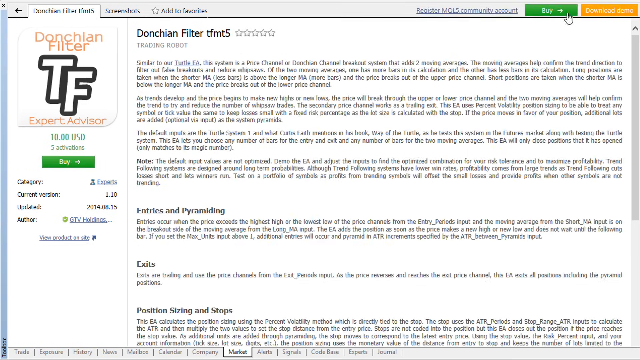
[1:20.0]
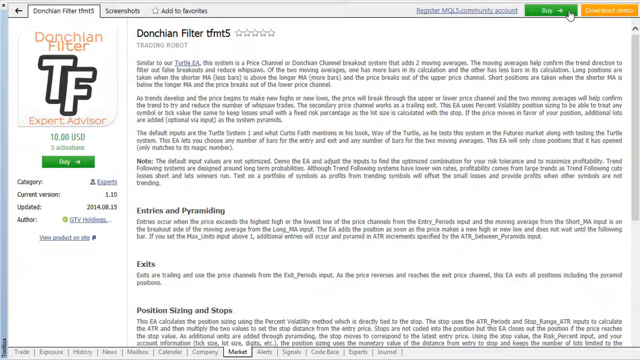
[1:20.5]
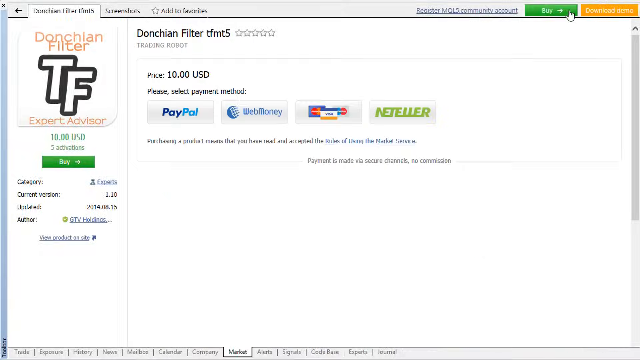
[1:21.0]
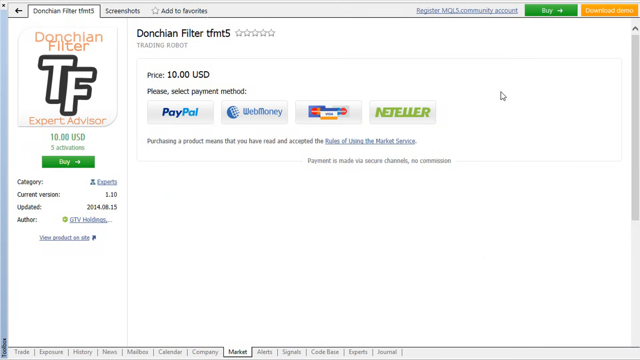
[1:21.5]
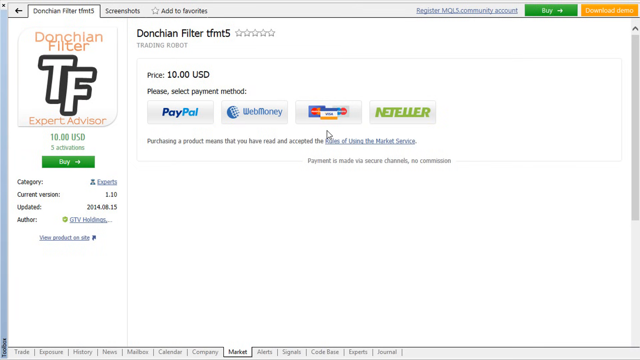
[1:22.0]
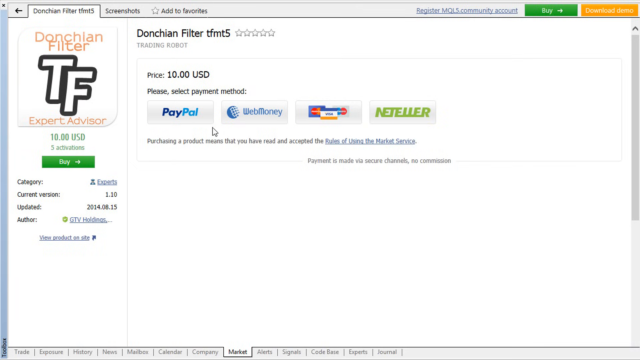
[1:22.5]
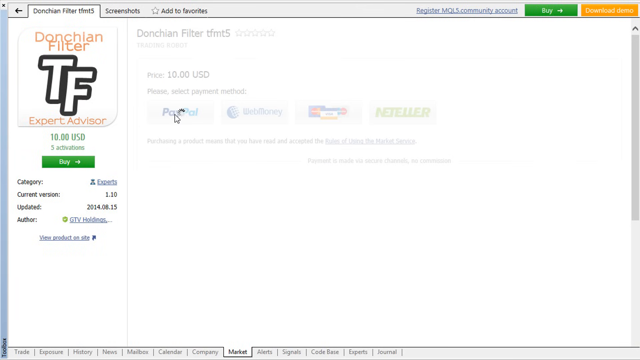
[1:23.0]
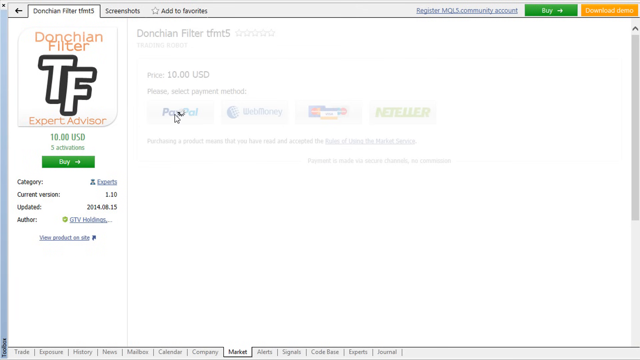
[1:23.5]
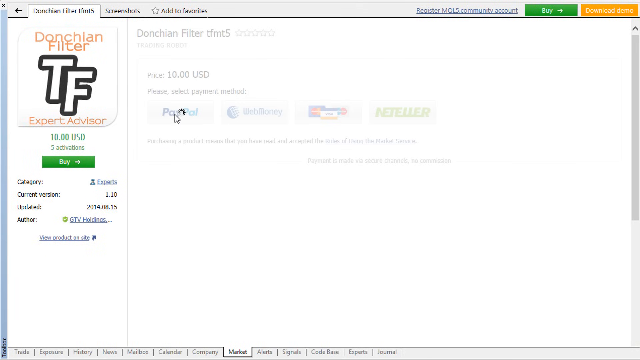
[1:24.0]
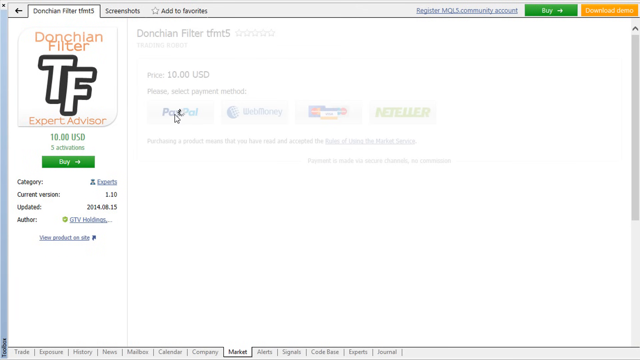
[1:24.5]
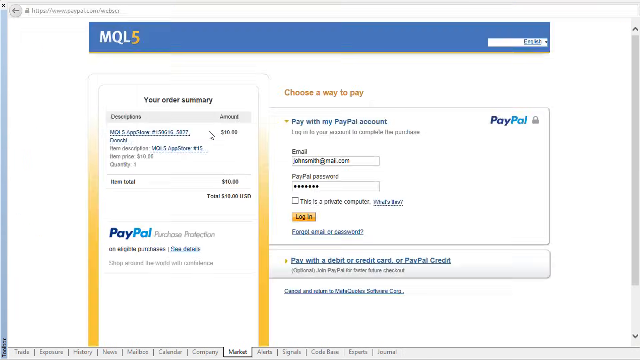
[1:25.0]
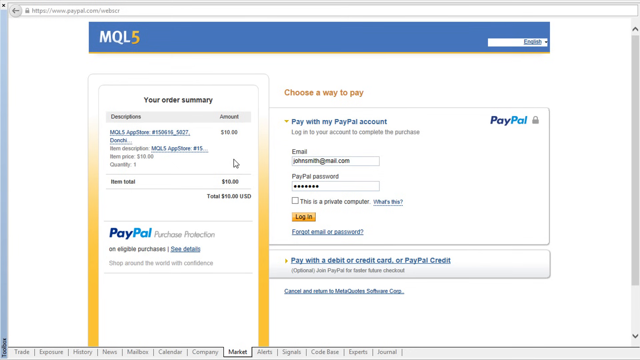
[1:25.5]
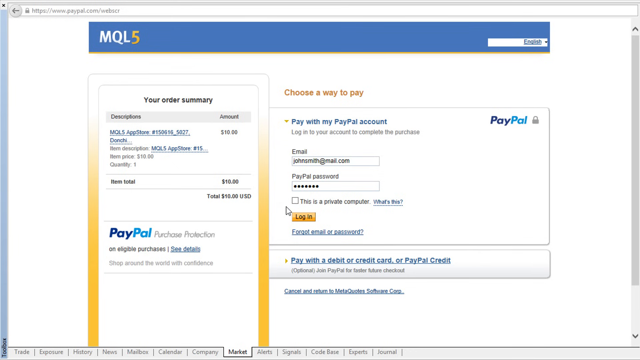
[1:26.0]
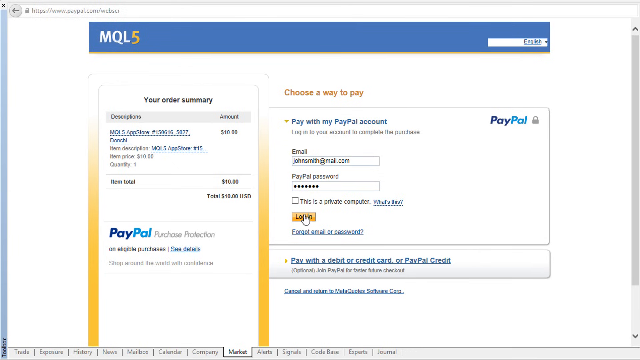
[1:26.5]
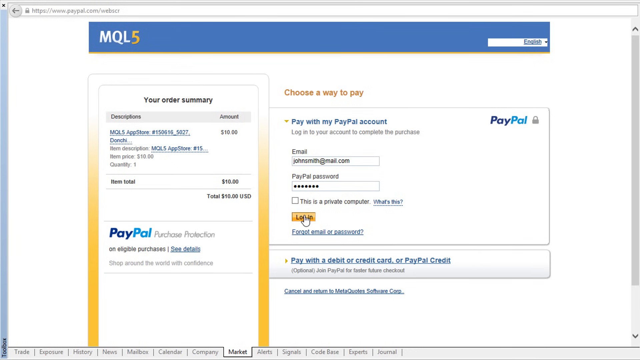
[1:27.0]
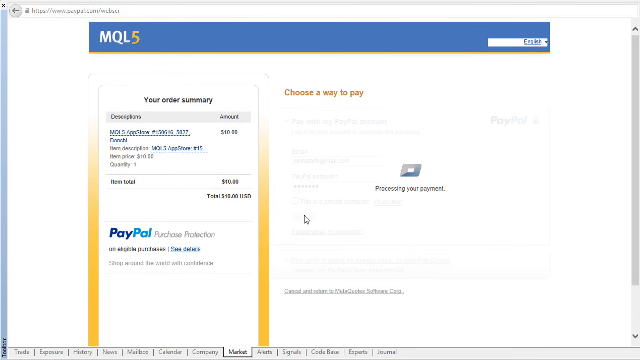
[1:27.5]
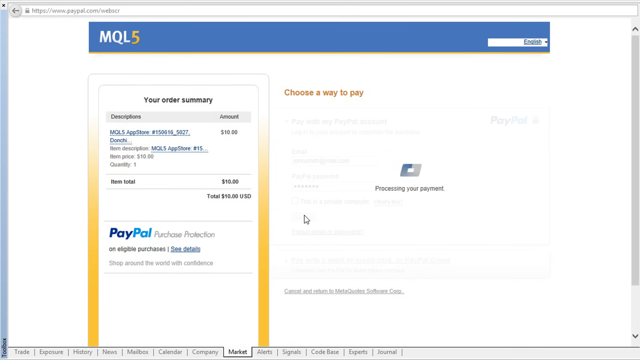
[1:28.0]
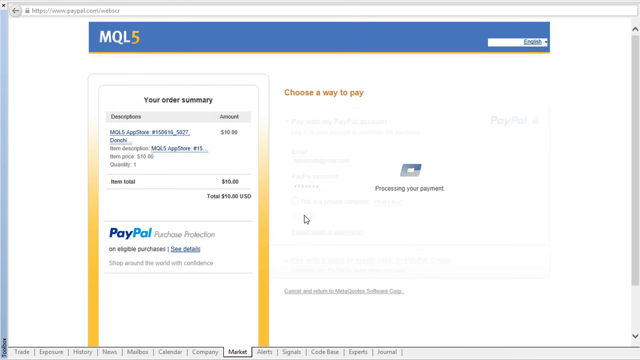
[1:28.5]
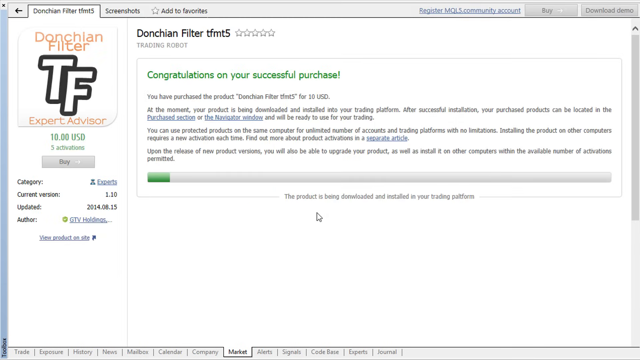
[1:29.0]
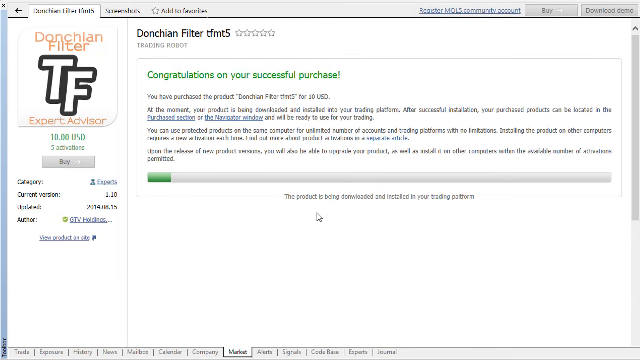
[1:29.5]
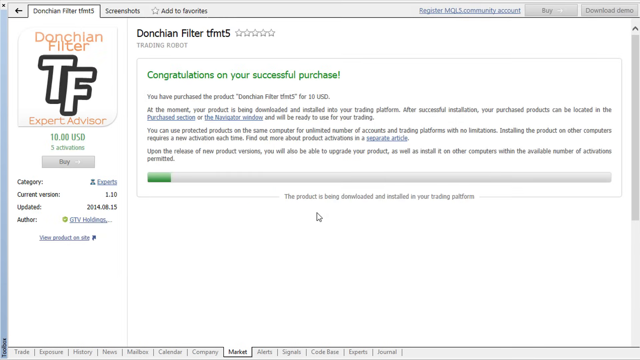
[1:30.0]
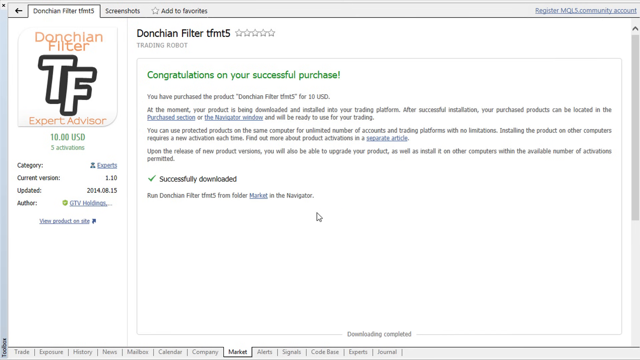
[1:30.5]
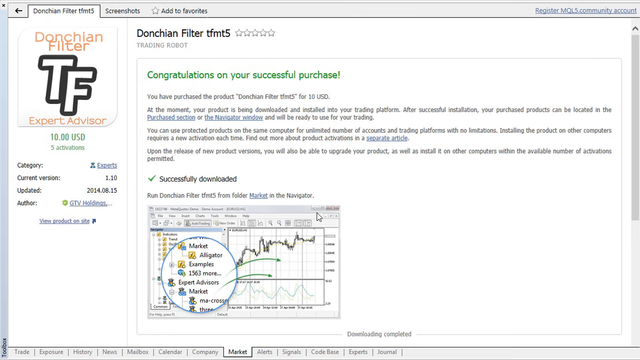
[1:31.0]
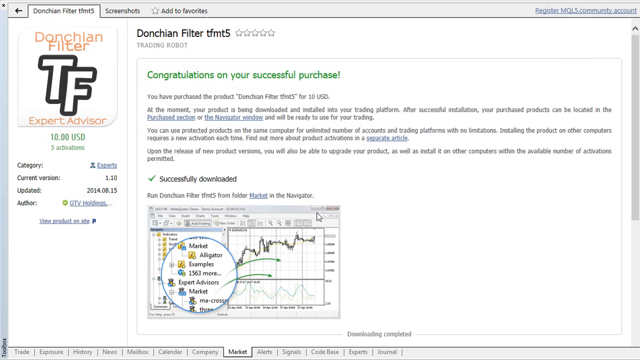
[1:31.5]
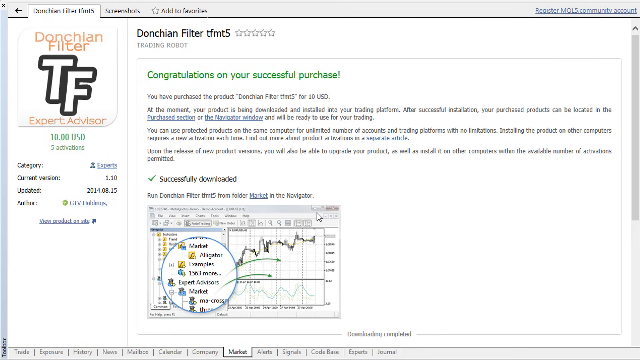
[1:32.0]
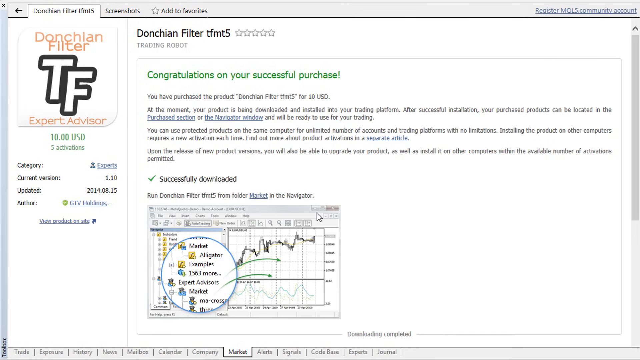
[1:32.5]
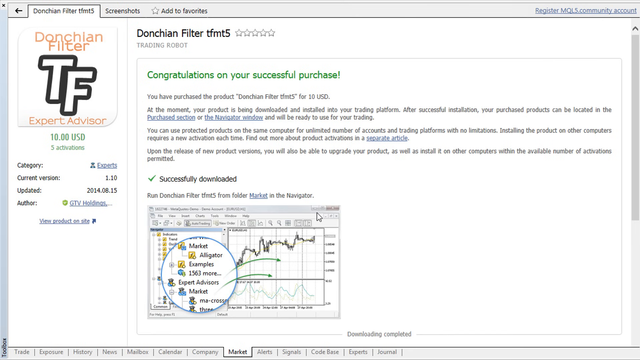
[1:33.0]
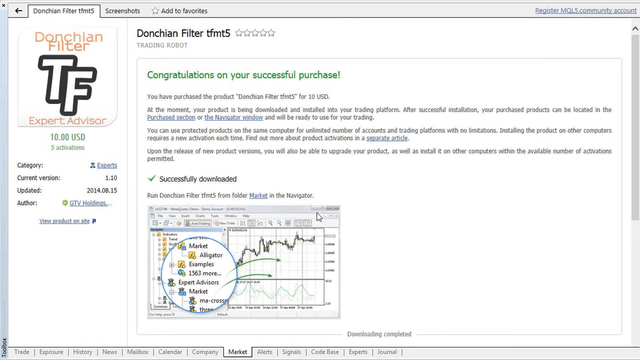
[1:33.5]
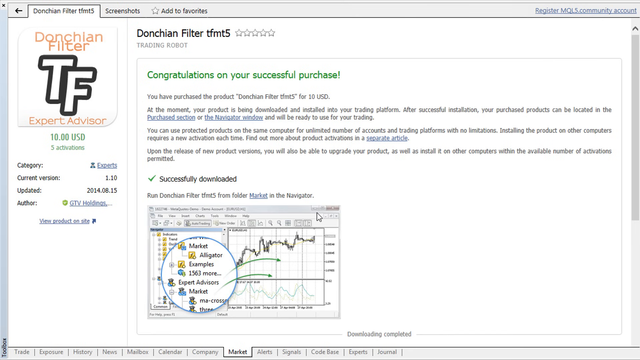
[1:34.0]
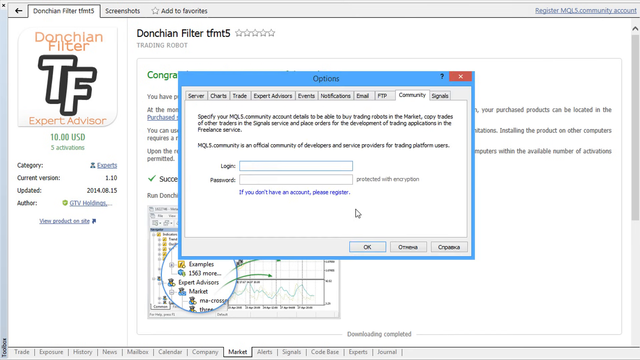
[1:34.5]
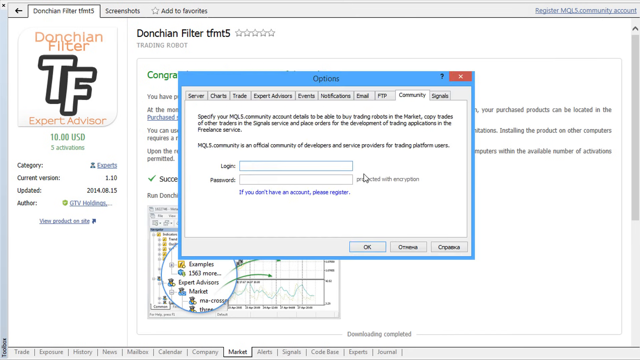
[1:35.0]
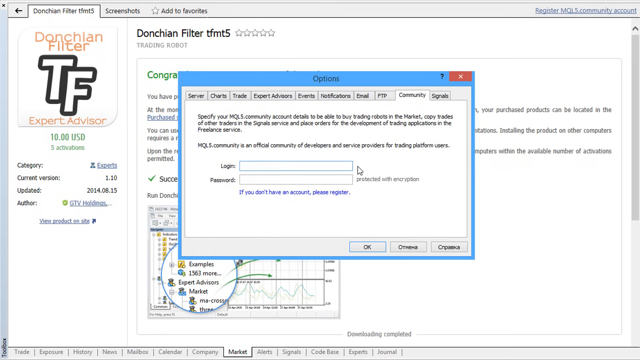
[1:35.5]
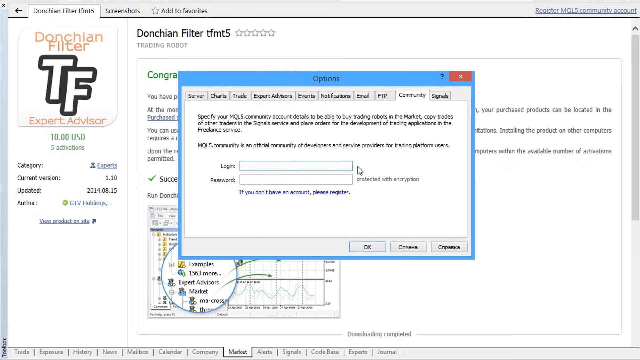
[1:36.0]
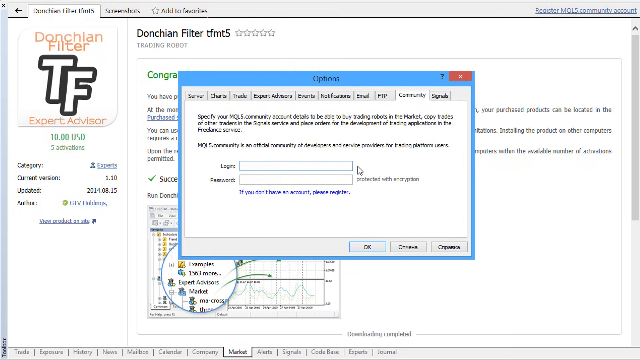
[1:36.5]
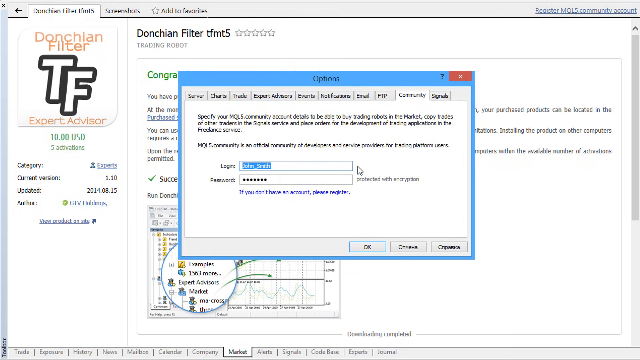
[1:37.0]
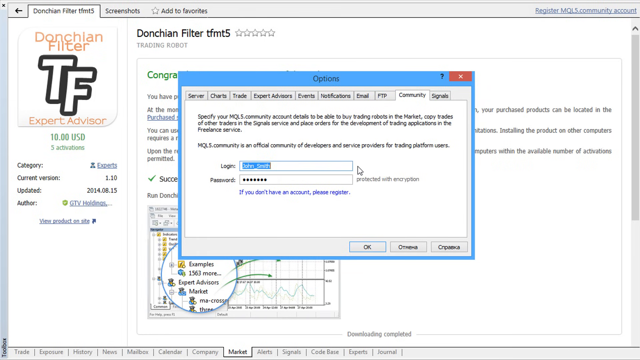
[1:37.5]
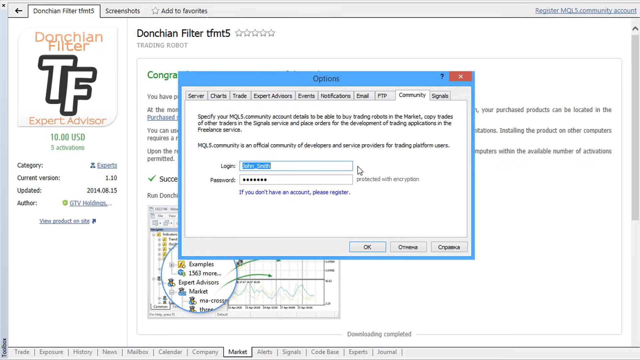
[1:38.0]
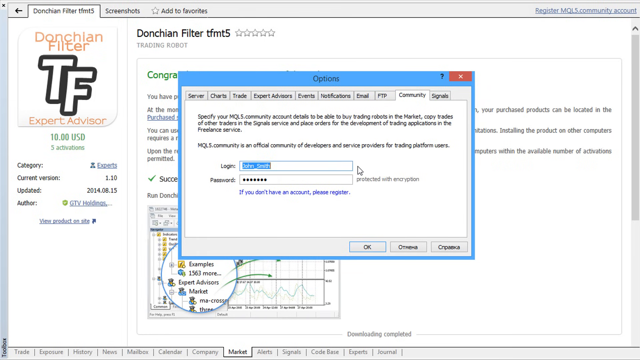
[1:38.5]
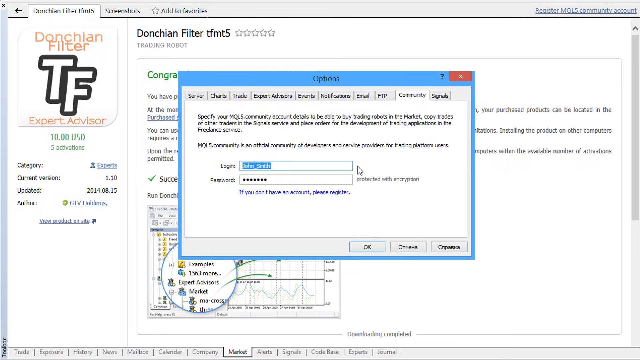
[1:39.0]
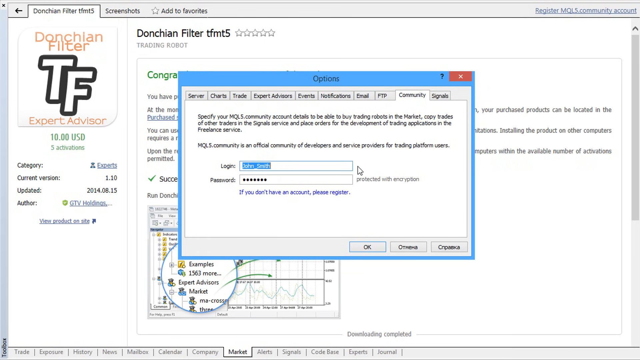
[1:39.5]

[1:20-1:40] The mouse cursor goes up and clicks the buy button again in the top right corner. Four payment options appear: PayPal, Web Money, MasterCard and Visa, and a service called Neteller. The PayPal option is clicked, showing the same book, with the email and PayPal password already entered. The login button is clicked, the payment shows as processing, and the book is purchased again, this time with the PayPal account. Afterward, another window opens in the middle with two text boxes for the login and password. The login John Smith is entered, and the password is entered automatically.